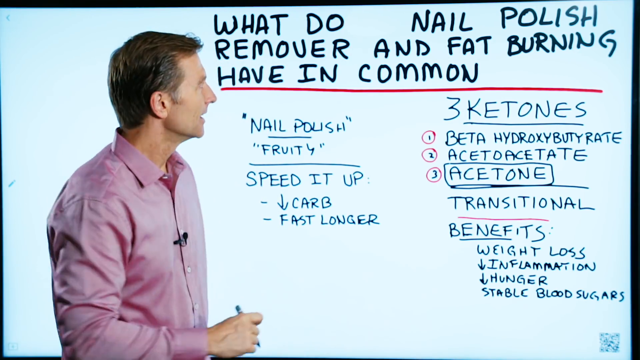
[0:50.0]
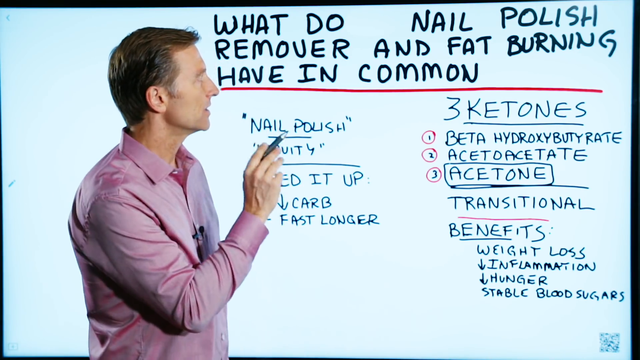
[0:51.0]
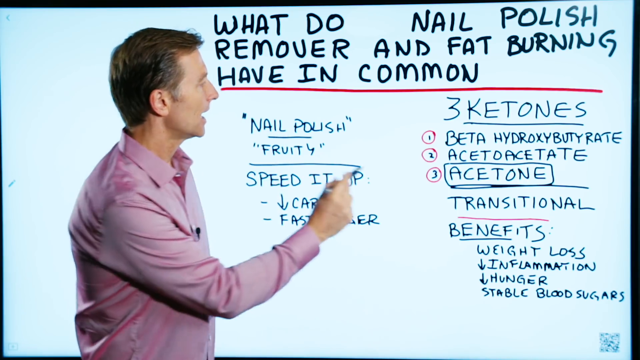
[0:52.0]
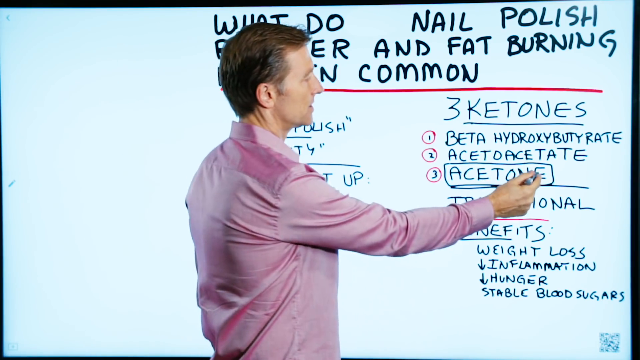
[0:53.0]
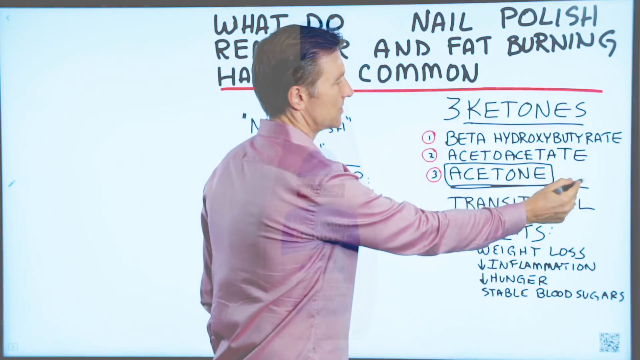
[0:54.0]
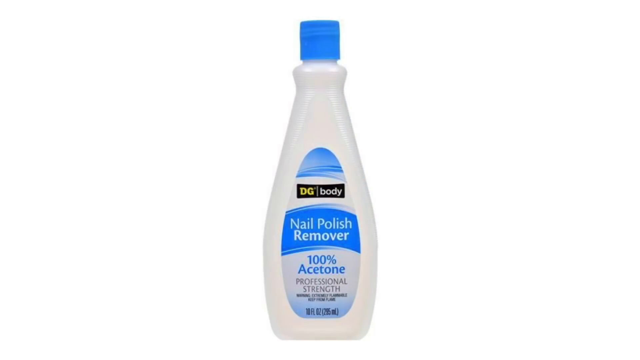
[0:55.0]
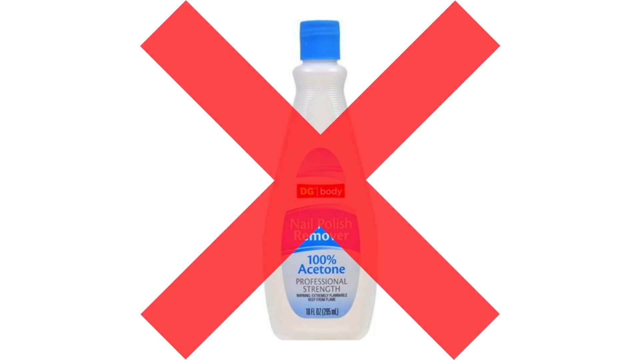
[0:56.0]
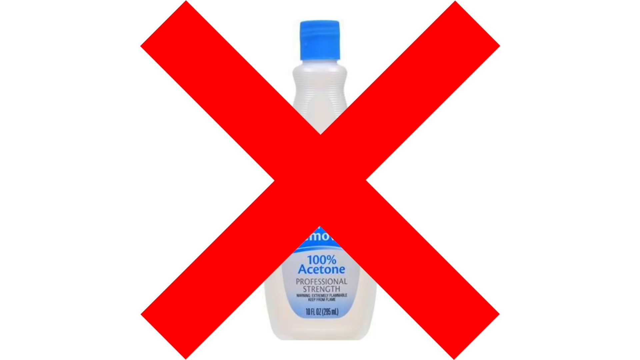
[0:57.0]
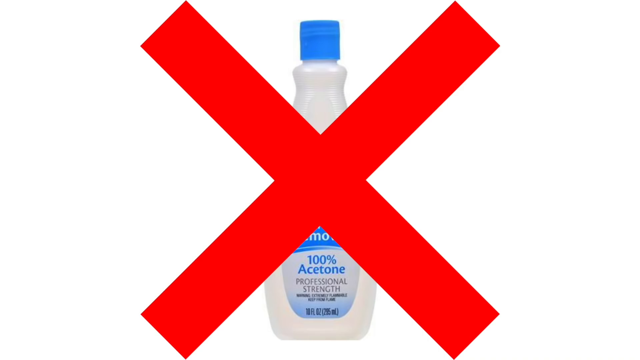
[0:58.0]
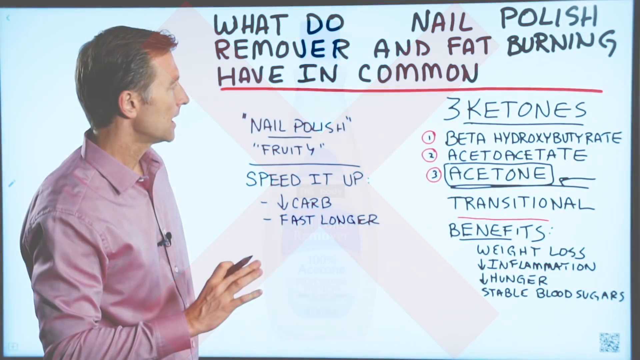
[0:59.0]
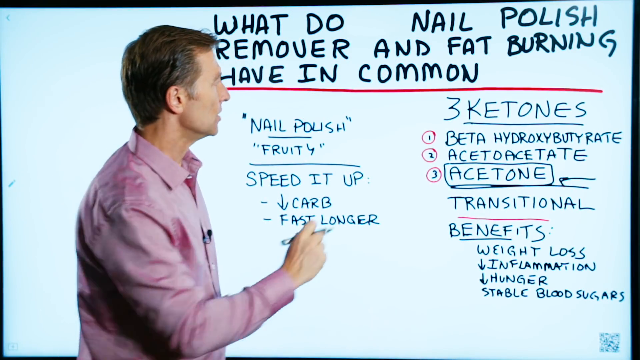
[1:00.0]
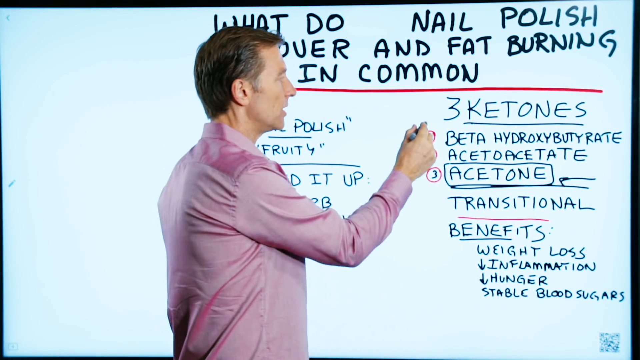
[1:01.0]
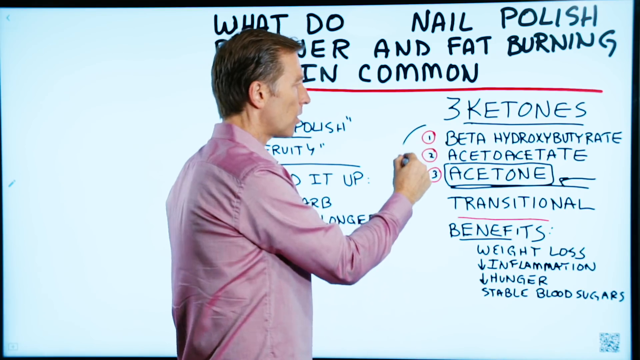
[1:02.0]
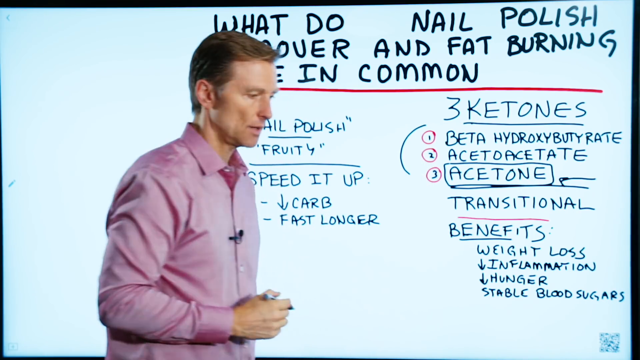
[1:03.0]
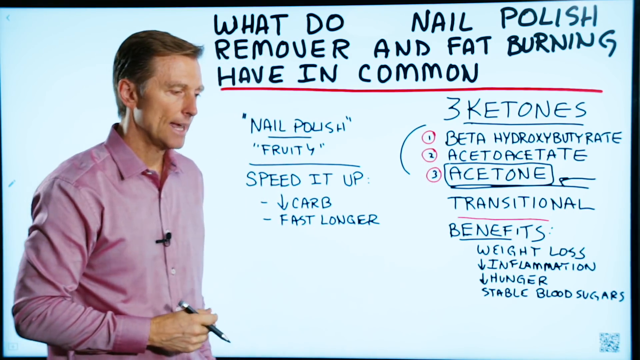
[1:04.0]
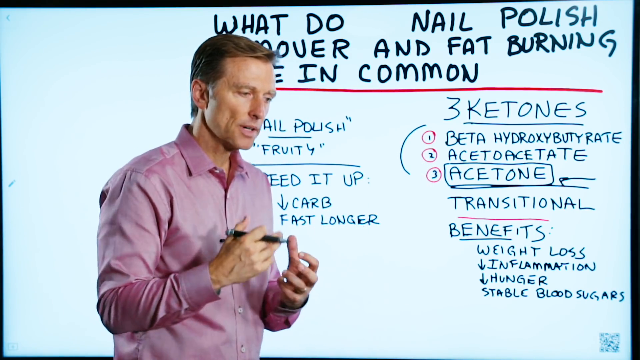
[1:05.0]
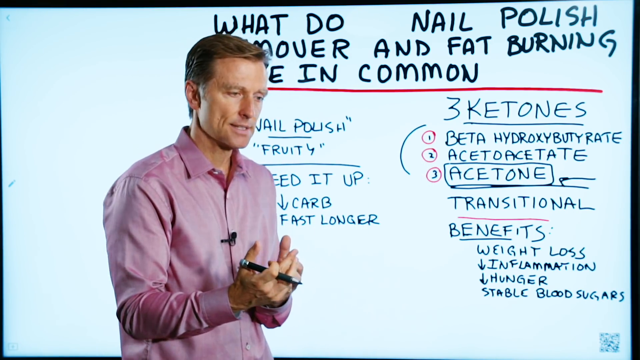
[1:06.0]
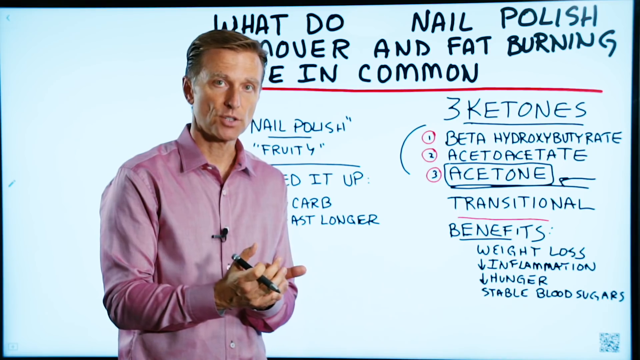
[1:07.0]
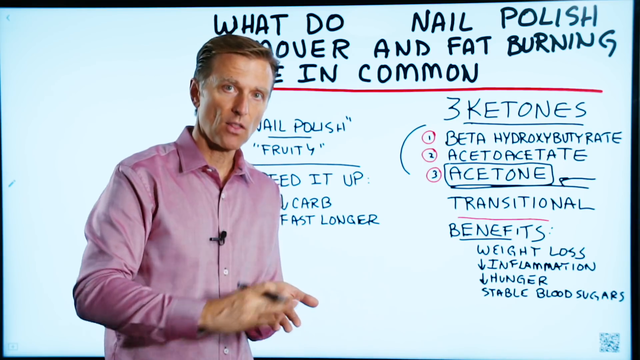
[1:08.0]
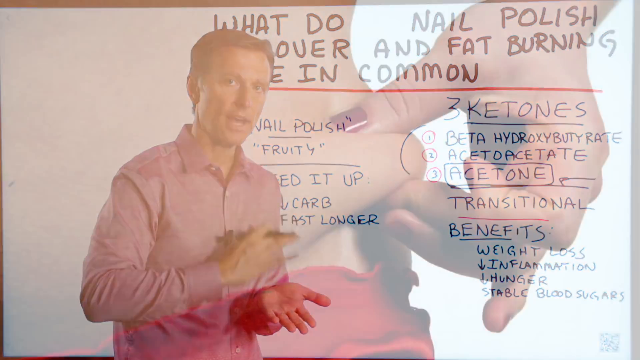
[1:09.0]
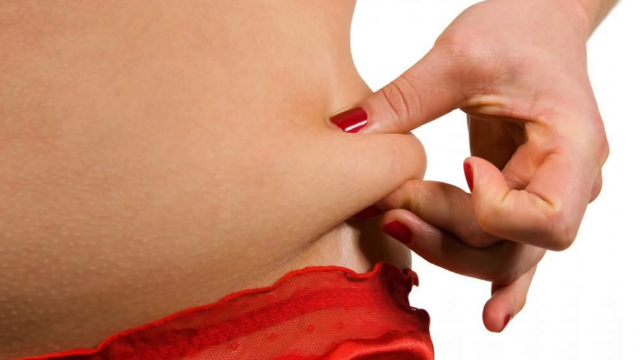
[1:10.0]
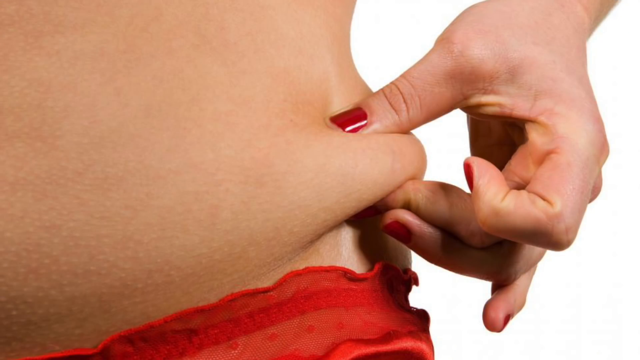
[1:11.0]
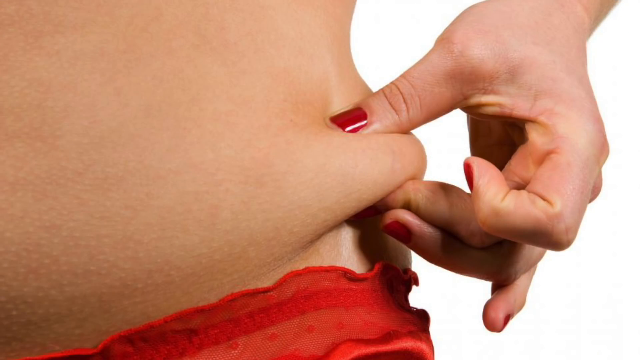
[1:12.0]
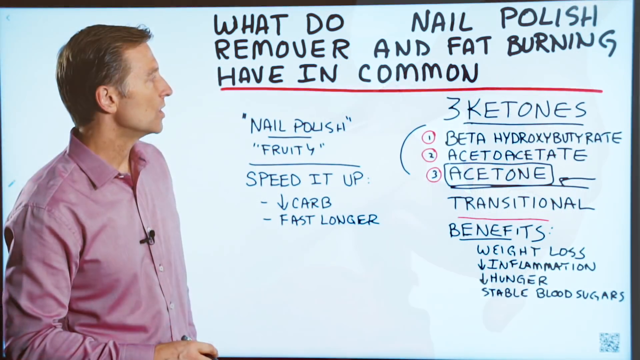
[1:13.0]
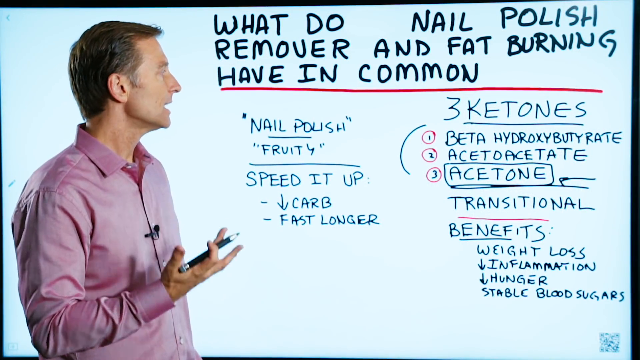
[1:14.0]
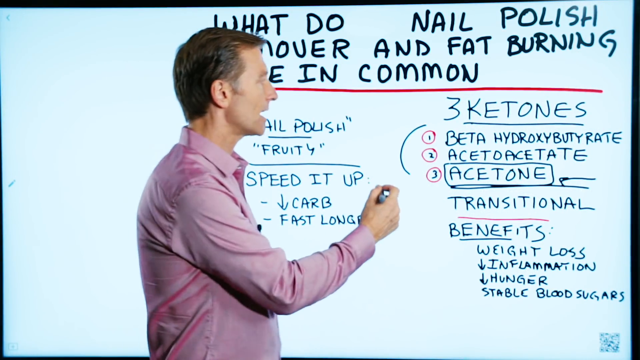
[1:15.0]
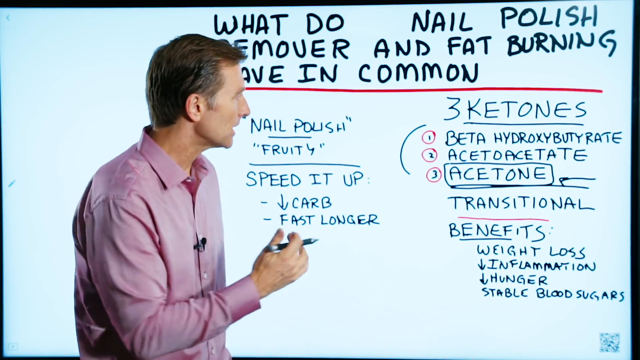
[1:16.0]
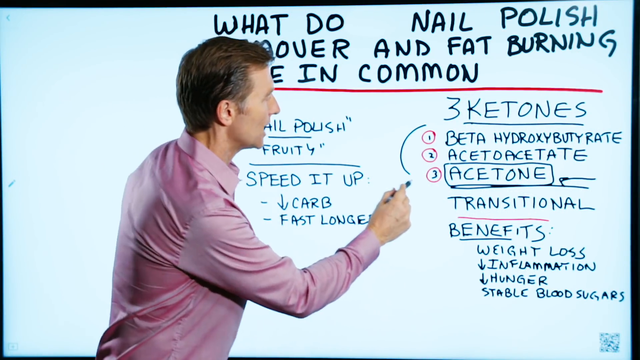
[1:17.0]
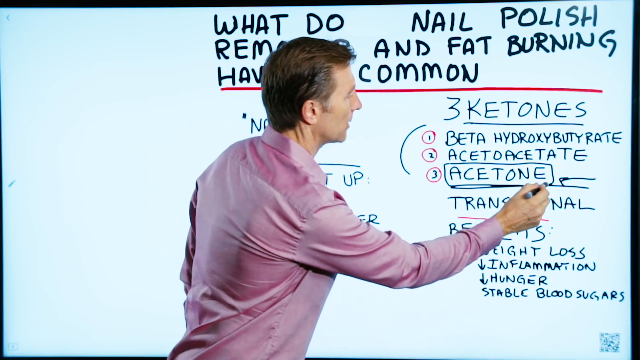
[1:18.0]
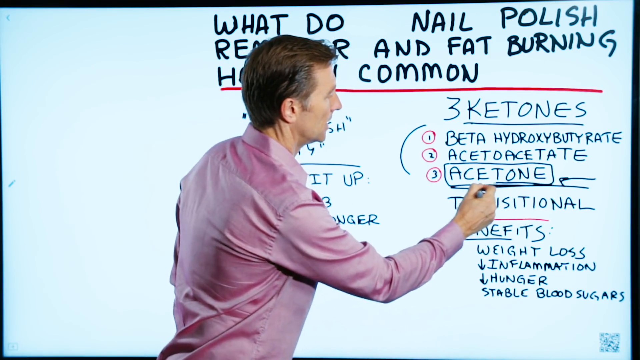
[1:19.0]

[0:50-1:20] The presenter faces the board, raises his right hand and shakes it, then points at "acetone" again and draws something to its right. The shot shifts to a still image of a bottle of Dollar General Body Nail Polish Remover as a giant red X fades onto the screen. Back with the presenter, the three bullet points beta-hydroxybutyrate, acetoacetate and acetone are on the board. After drawing a little half circle, he kind of turns closer toward the camera, his head angled down, then slowly looks up and uses both hands, his right hand moving in a circular motion. The video cuts to an image of a woman with red nail polish pinching the side of her waist, then back to the presenter, who continues staring at the board and focusing on acetone.